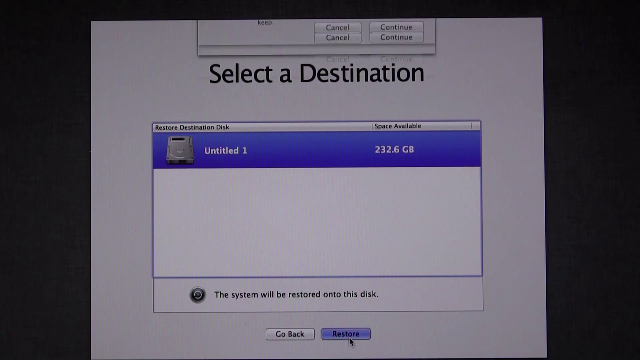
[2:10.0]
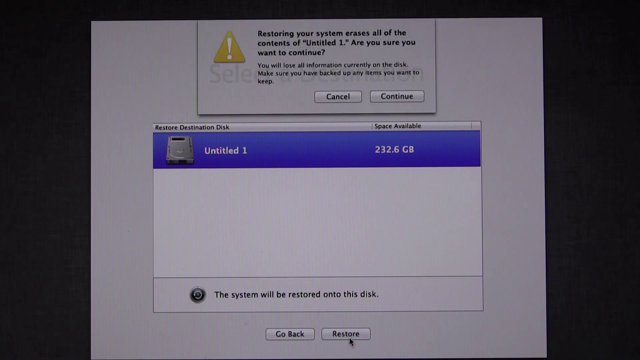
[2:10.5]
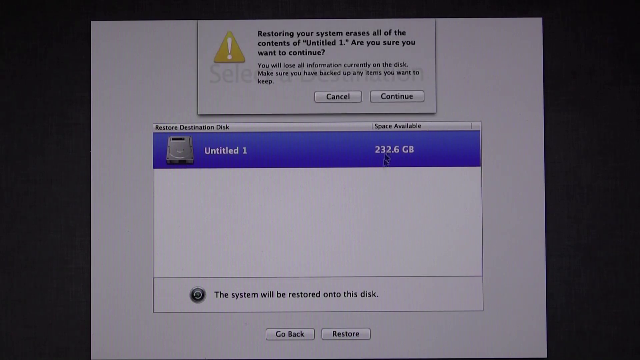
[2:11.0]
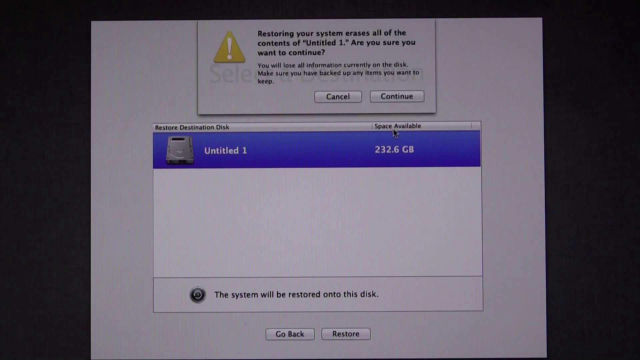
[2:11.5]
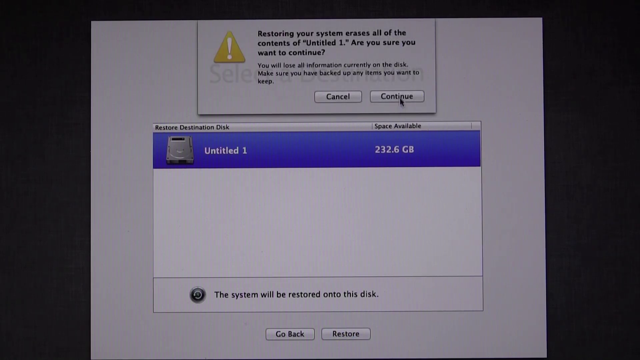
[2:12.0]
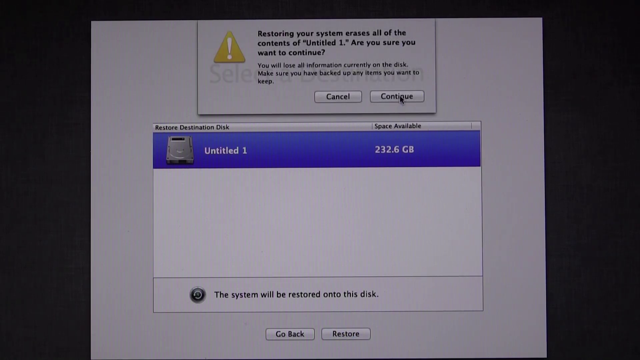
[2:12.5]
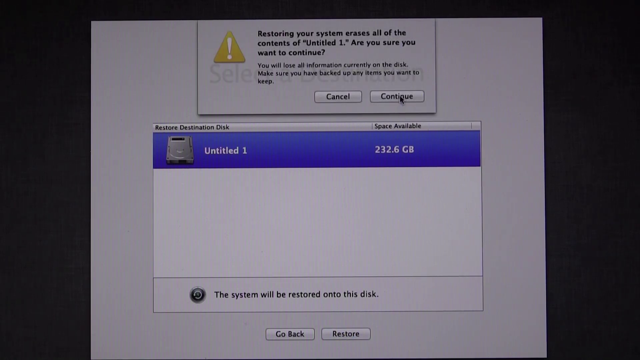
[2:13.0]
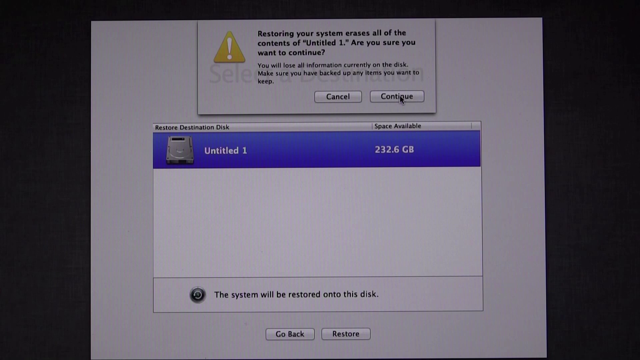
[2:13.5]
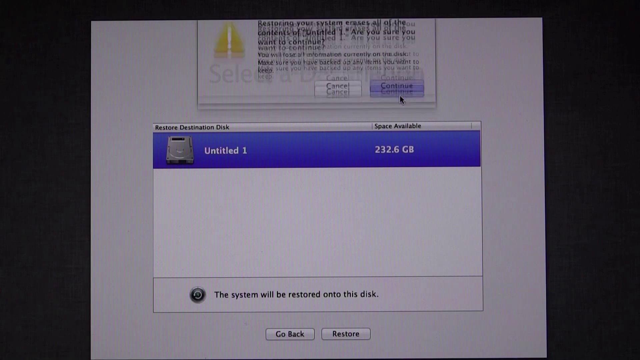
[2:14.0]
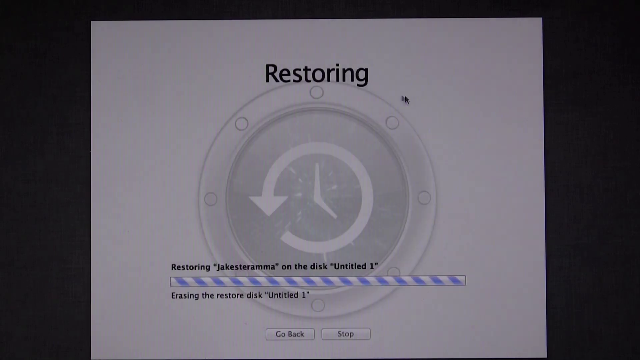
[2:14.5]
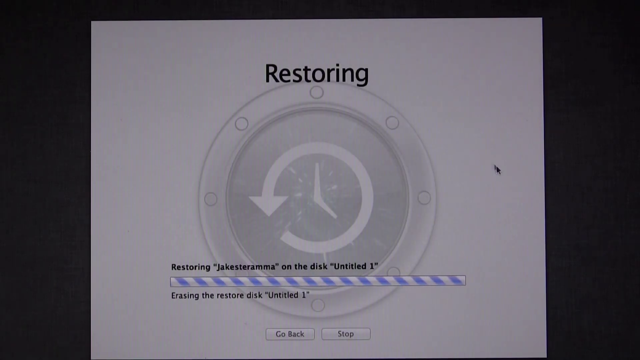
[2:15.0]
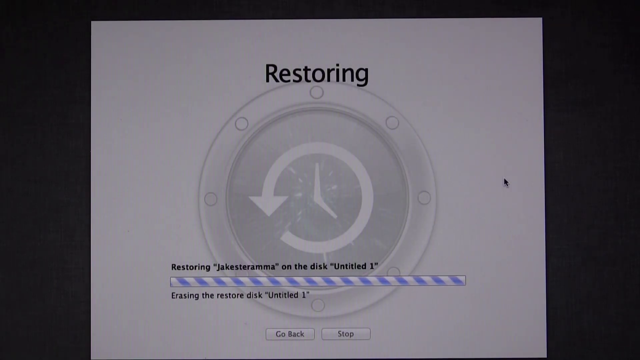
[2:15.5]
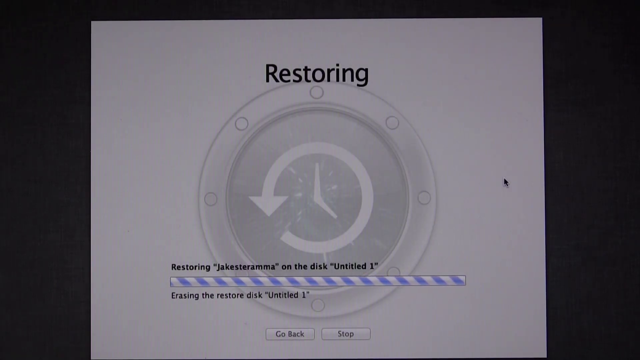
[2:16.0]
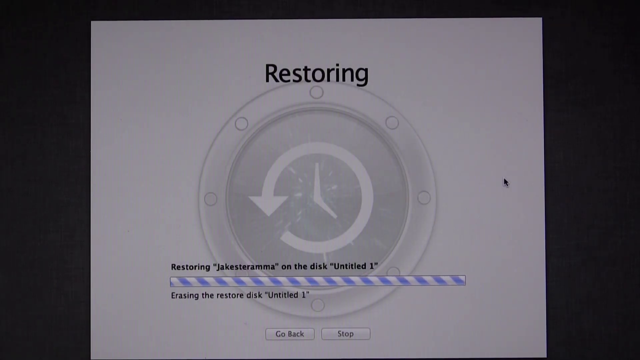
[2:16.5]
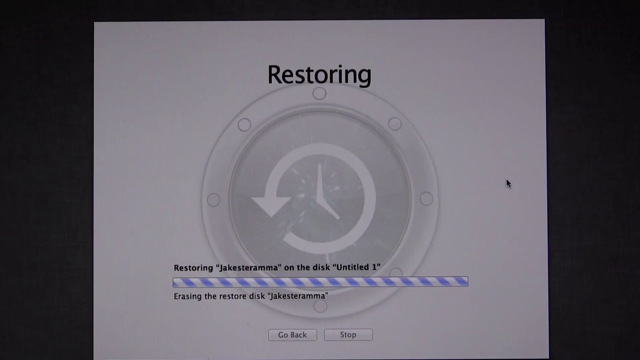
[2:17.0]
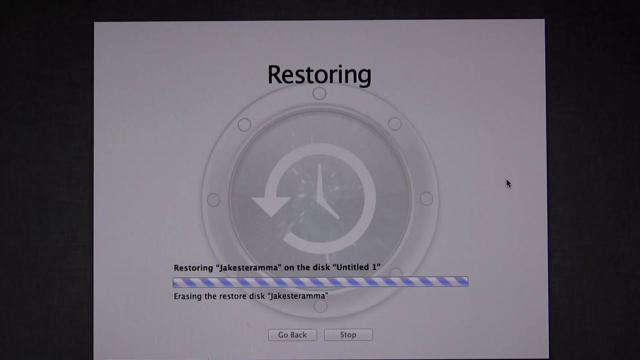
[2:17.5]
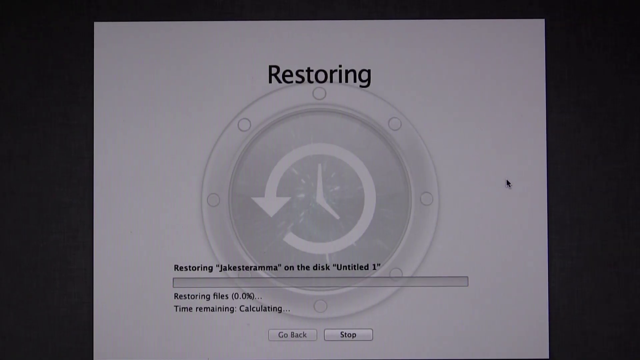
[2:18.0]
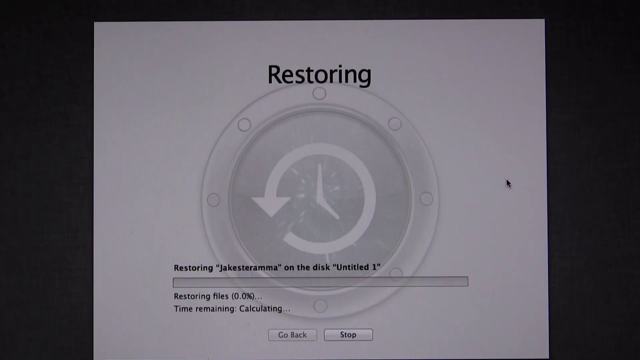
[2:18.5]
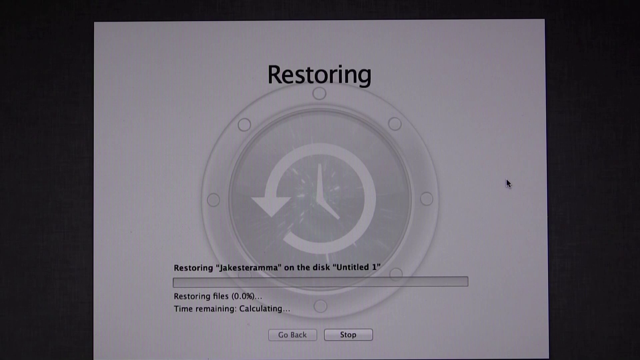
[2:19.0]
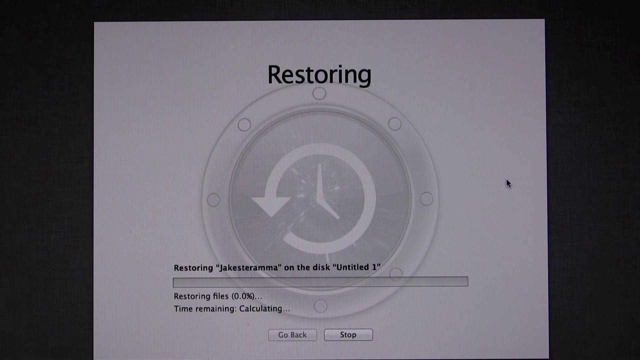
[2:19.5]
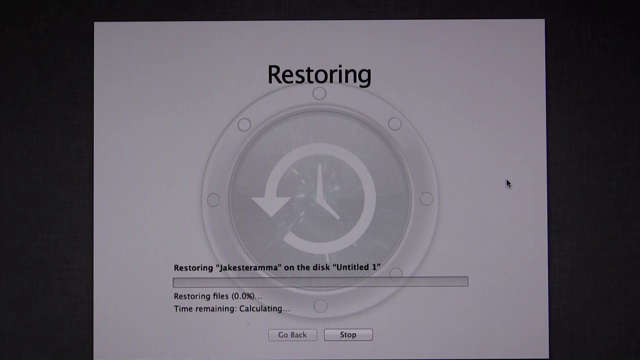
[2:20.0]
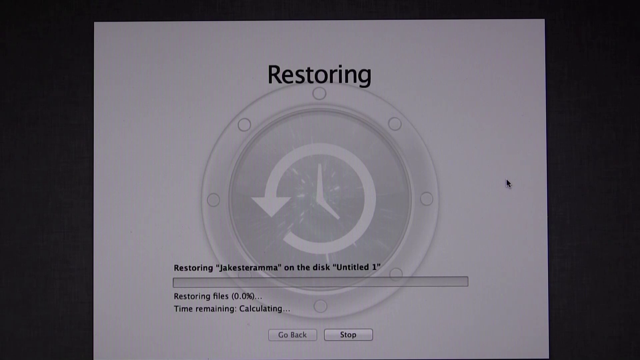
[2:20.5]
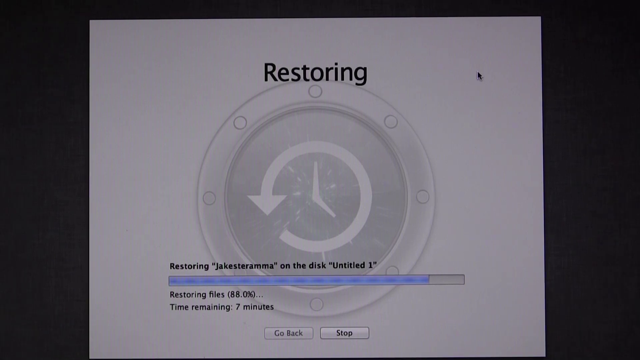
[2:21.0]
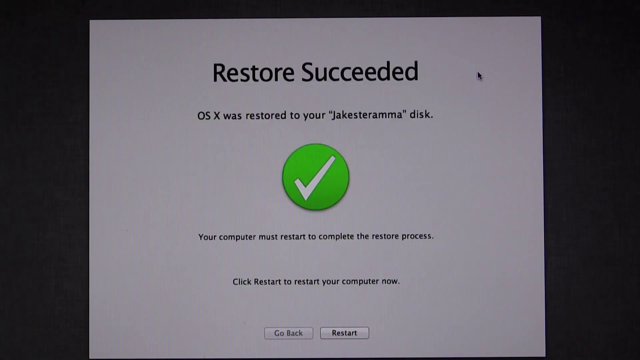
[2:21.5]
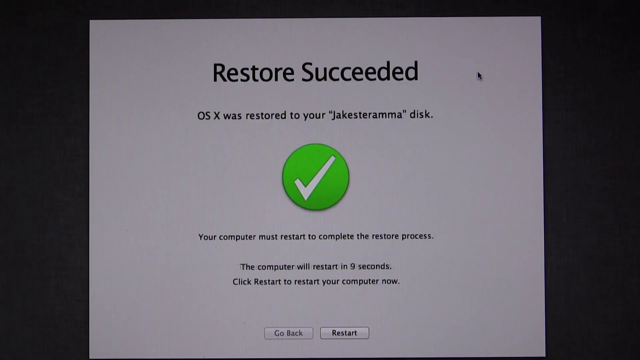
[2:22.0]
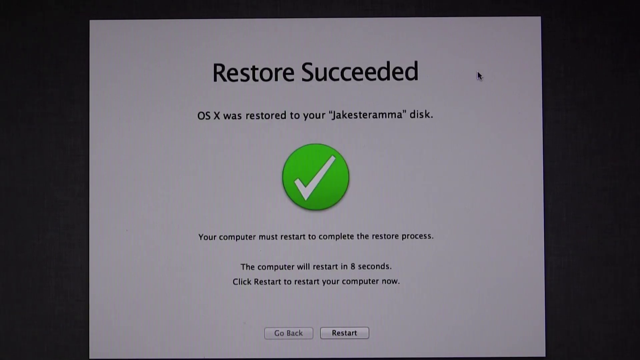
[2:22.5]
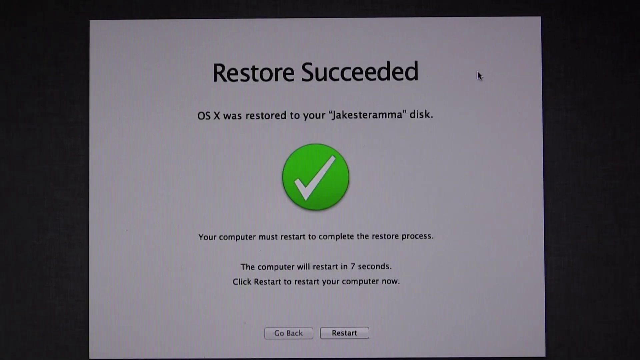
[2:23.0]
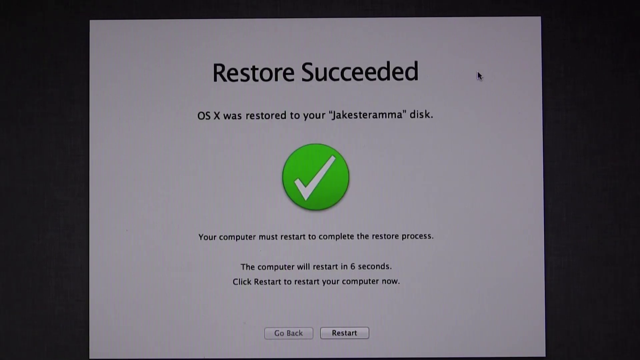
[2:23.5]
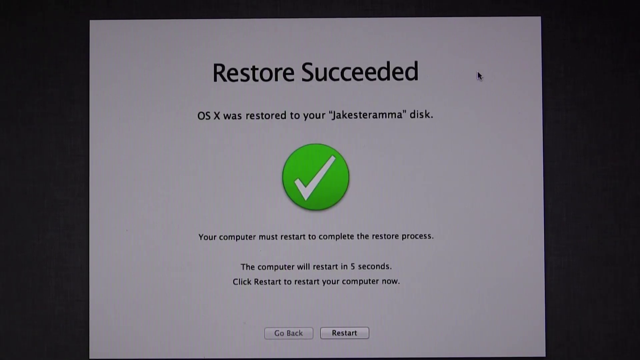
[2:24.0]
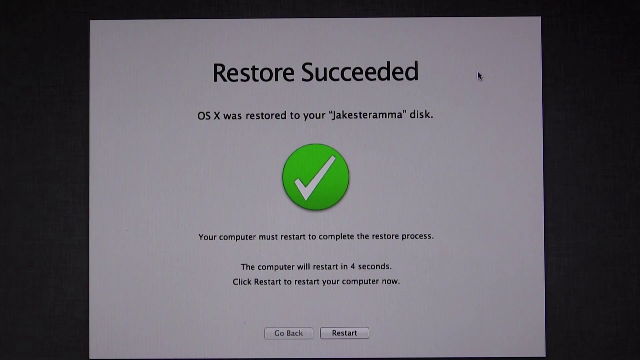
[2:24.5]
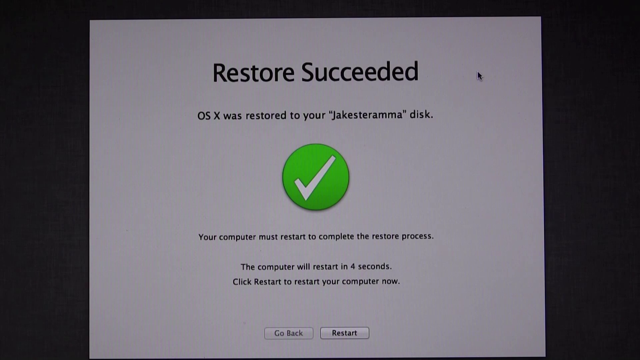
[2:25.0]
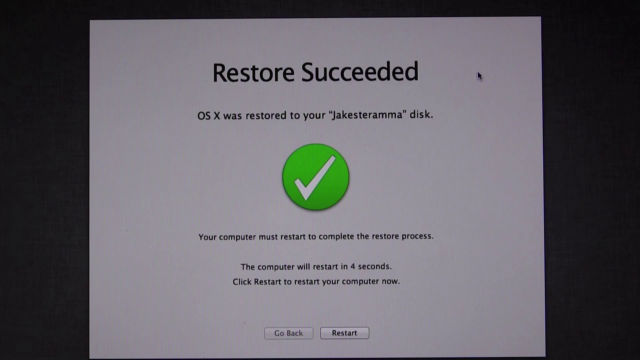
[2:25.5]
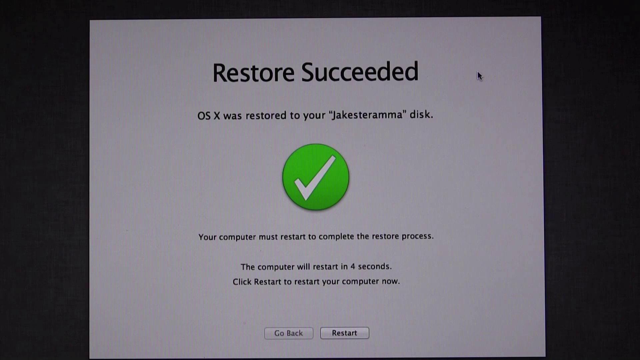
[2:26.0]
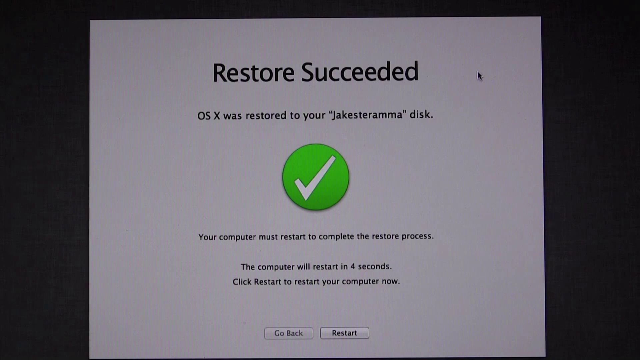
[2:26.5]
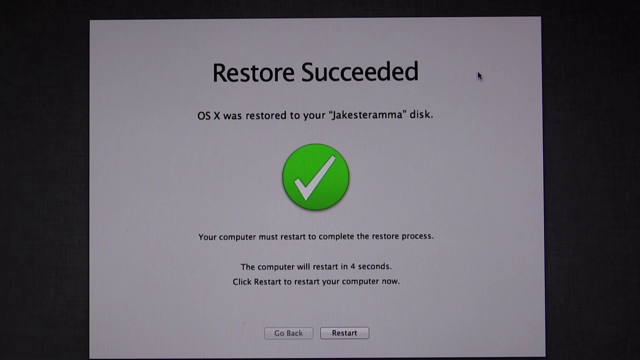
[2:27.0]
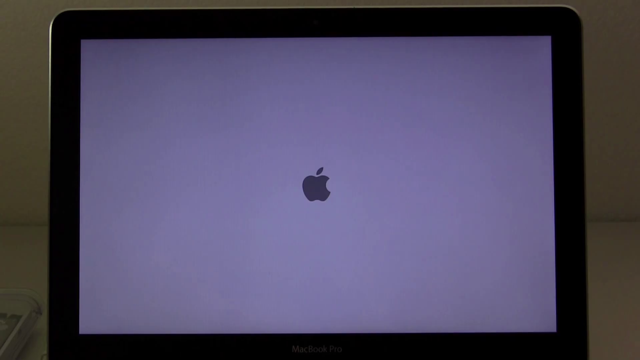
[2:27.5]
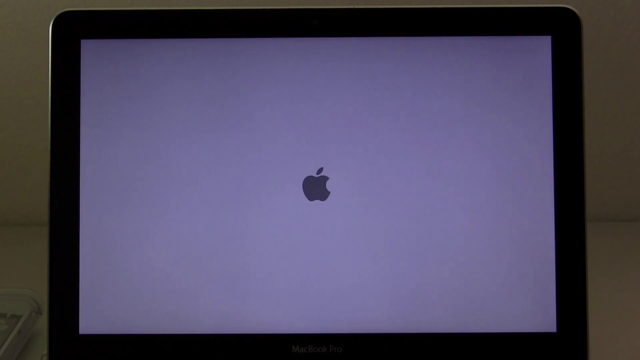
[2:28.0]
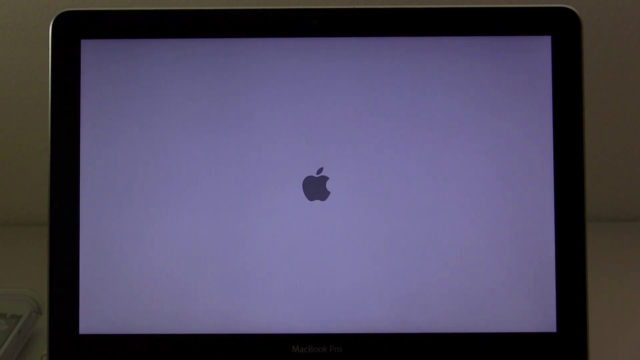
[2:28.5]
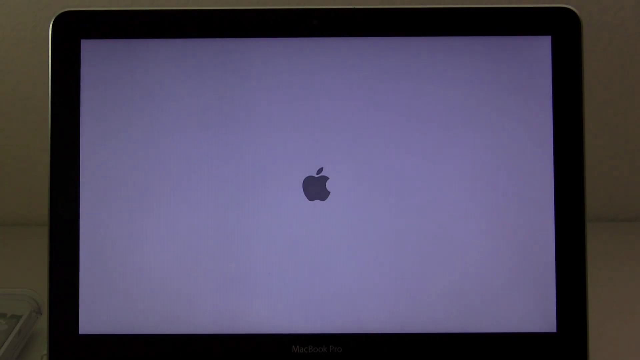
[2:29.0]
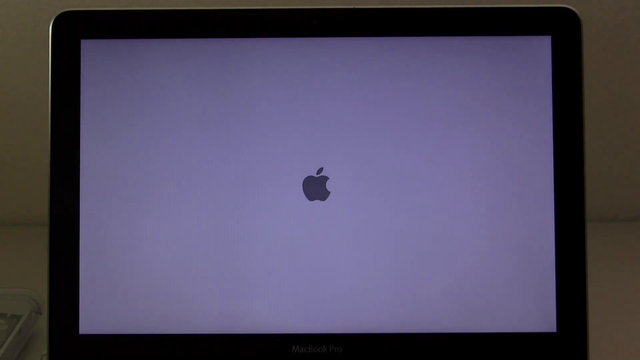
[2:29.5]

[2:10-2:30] The screen shows "selected destination," and the person clicks "untitled one," with space available listed as "232.6 gigabytes." Some information above it is cut off because the view is zoomed in on what the person is working on. A pull-down appears with a triangle containing a question mark and the text "restoring your system erases all of your contents of untitled one. Are you sure you want to continue? You will lose all information currently on the disk. Make sure you have backed up any items you want to keep," with options to cancel or continue. The person selects continue. The restoring page says "restoring" and shows an icon that looks like a clock inside a compass, with an arrow going counterclockwise in a circle and a clock inside that looks like it shows 5 o'clock. The text mentions restoring to the disk untitled one and "erasing the restore disk untitled one." A progress bar with white and blue diagonal lines moves across as it restores. Then a green circle with a check mark appears with the text "restored succeeded" and "the computer must restart to complete the restore process. The computer will restart in eight seconds," counting down, along with "Click Restart to restore your computer now." The person clicks restart, and the screen goes back to the Apple image.